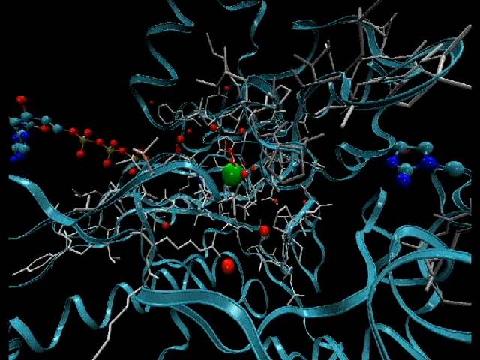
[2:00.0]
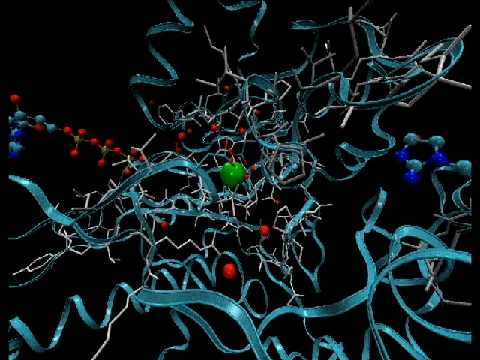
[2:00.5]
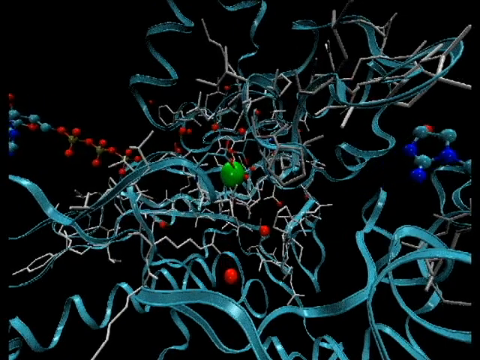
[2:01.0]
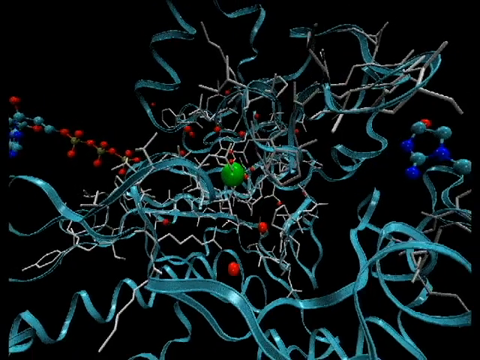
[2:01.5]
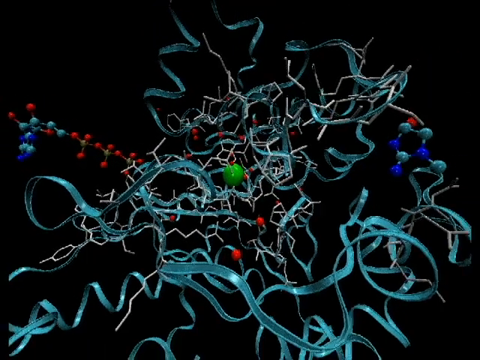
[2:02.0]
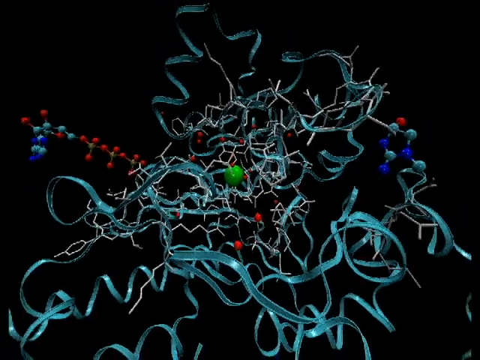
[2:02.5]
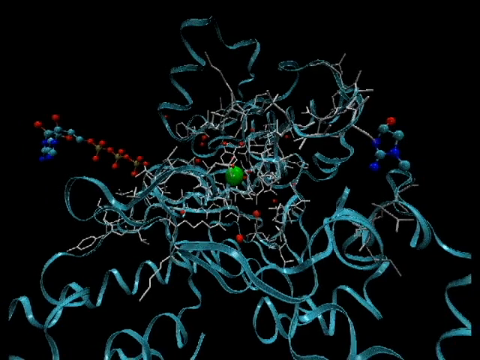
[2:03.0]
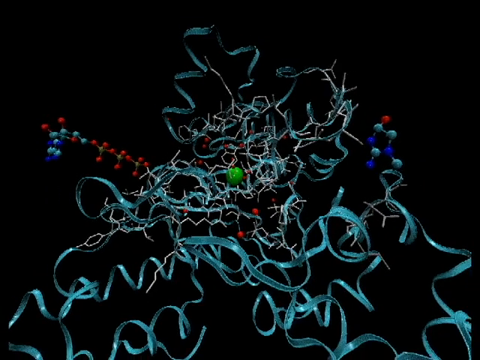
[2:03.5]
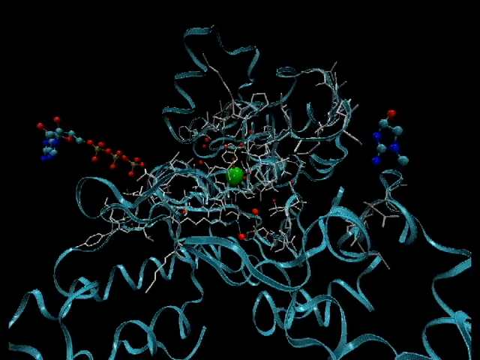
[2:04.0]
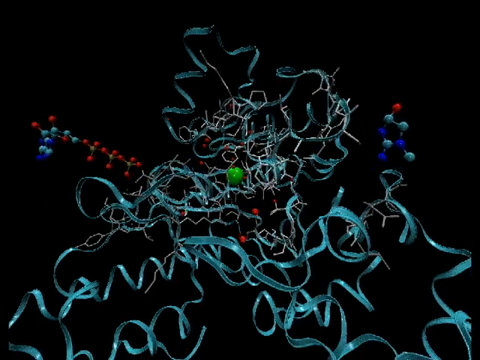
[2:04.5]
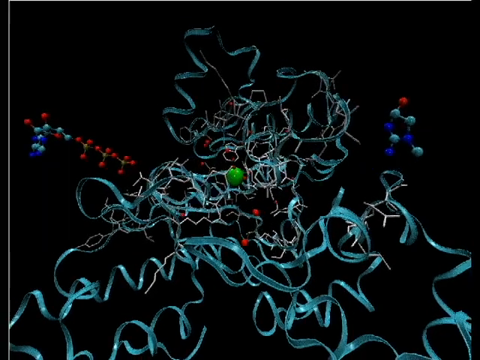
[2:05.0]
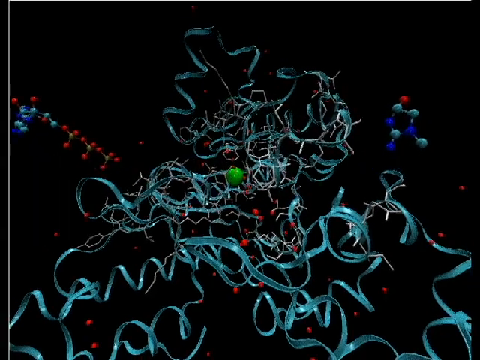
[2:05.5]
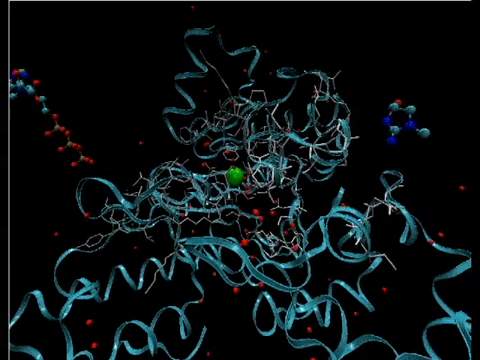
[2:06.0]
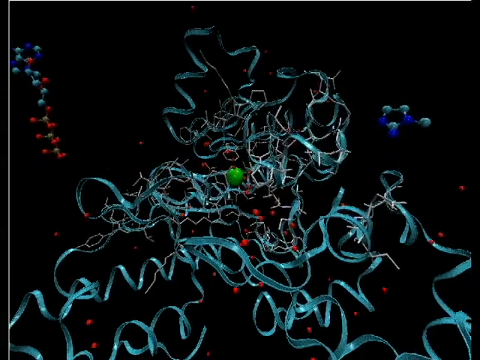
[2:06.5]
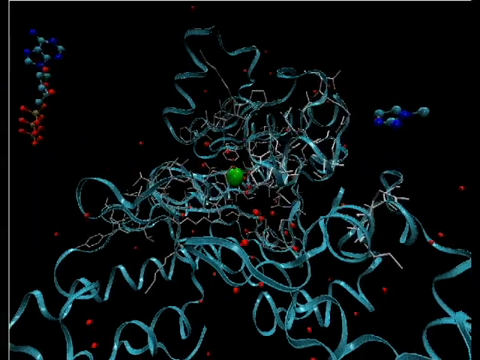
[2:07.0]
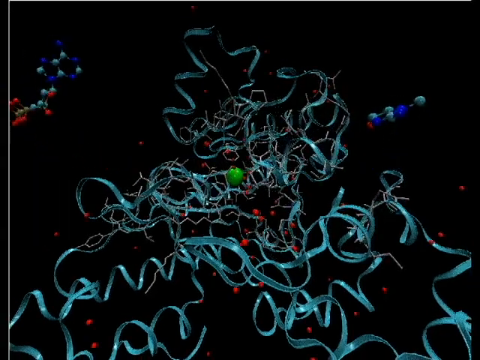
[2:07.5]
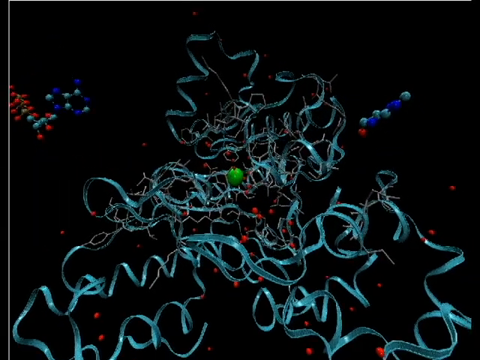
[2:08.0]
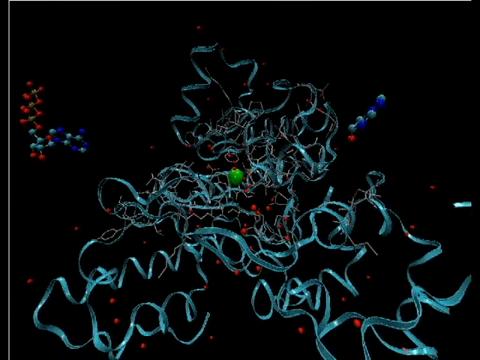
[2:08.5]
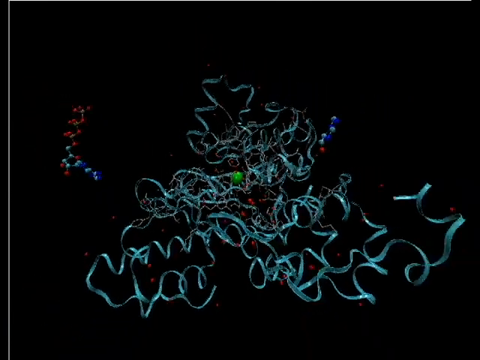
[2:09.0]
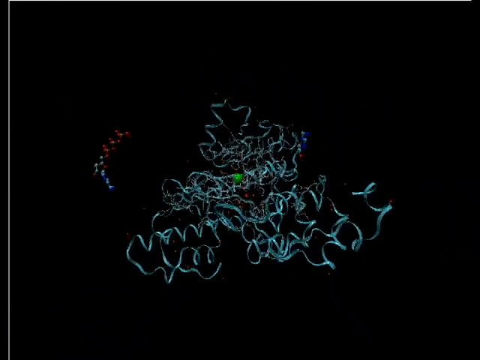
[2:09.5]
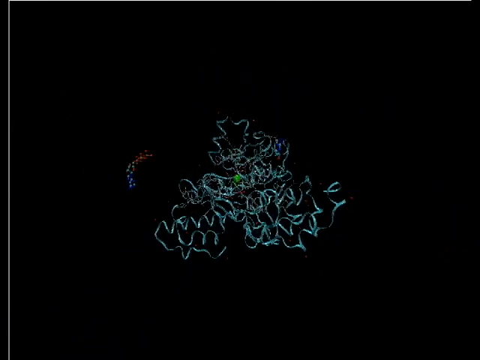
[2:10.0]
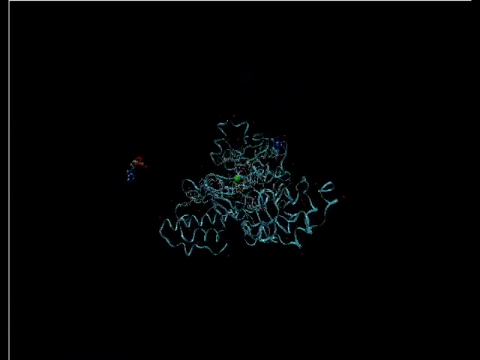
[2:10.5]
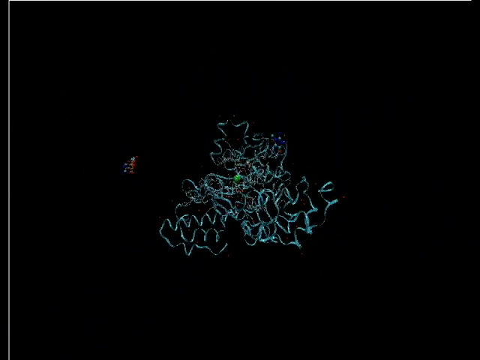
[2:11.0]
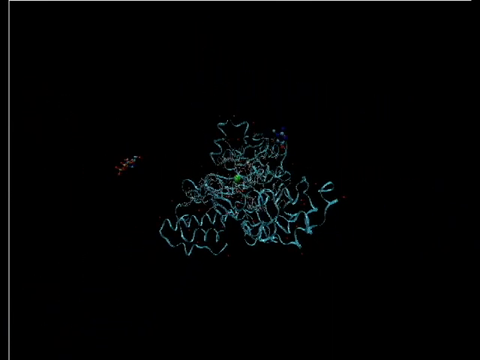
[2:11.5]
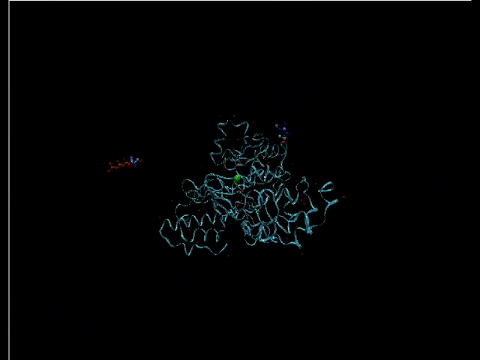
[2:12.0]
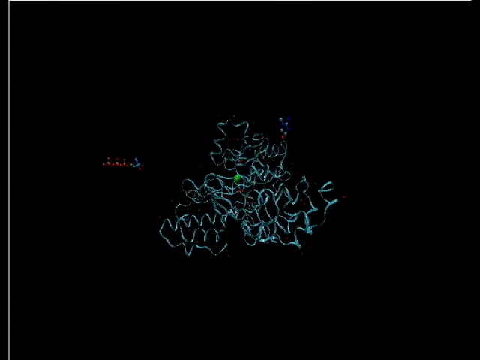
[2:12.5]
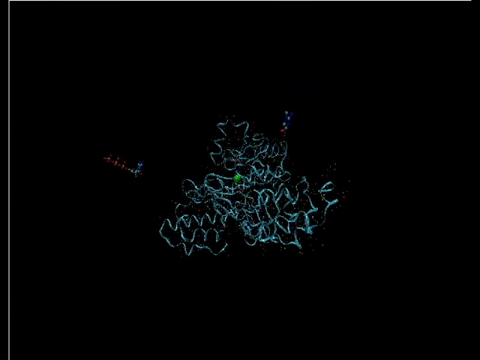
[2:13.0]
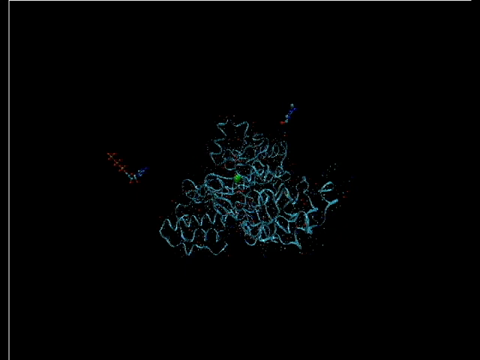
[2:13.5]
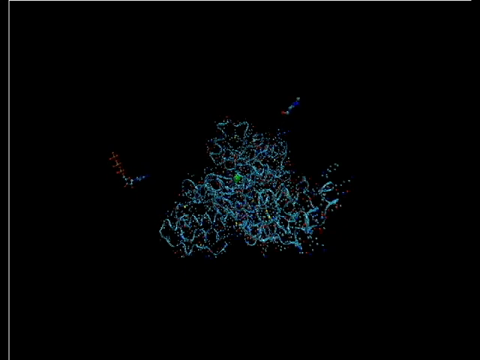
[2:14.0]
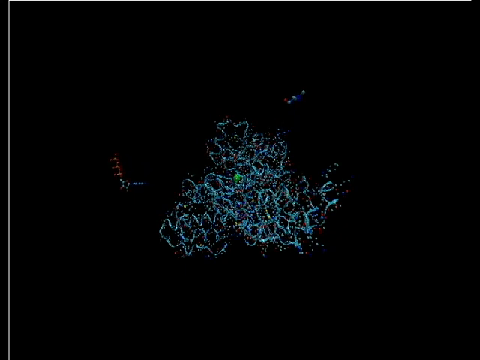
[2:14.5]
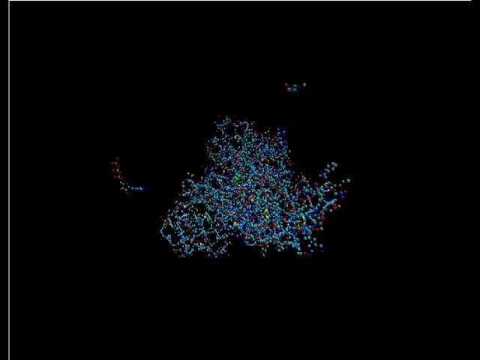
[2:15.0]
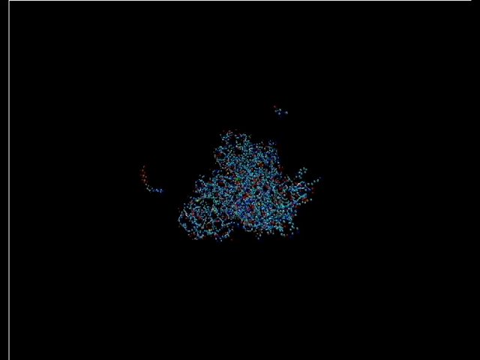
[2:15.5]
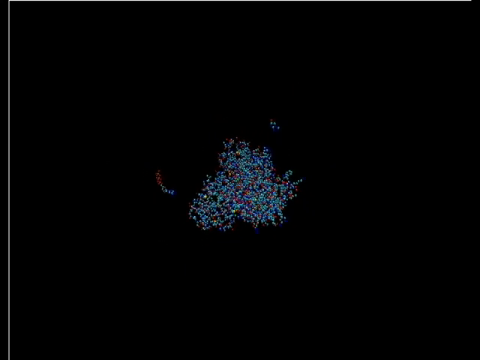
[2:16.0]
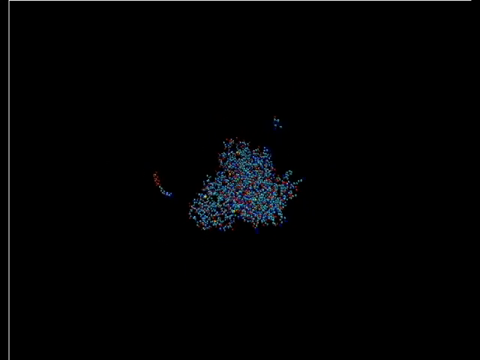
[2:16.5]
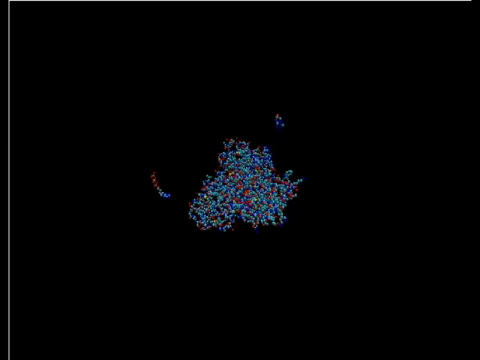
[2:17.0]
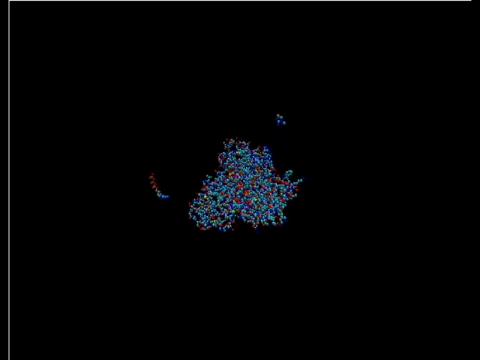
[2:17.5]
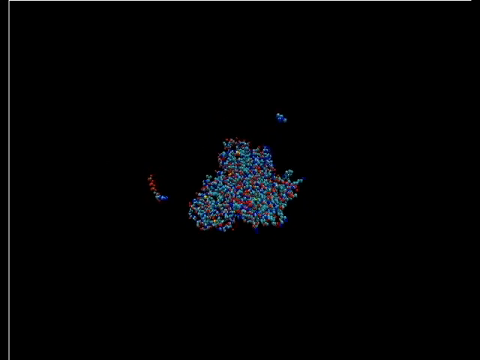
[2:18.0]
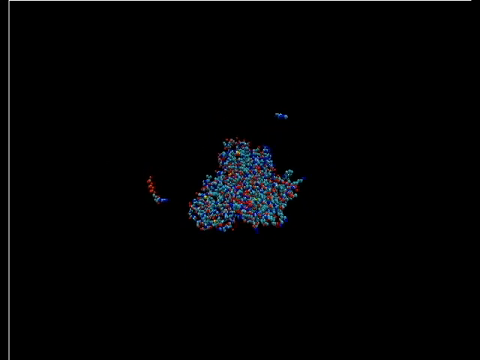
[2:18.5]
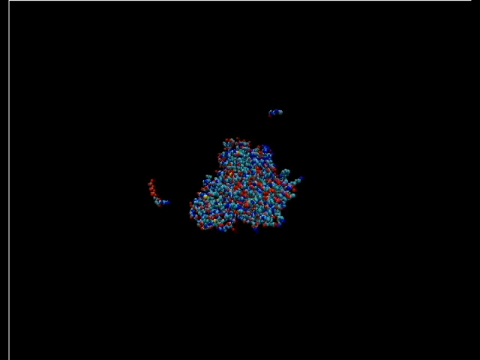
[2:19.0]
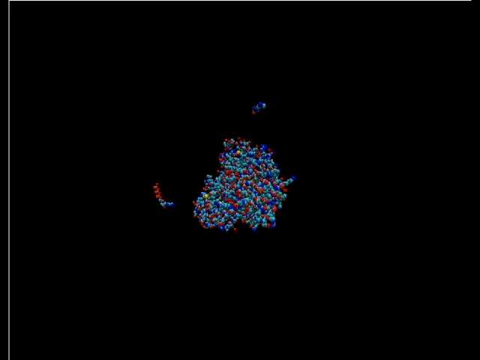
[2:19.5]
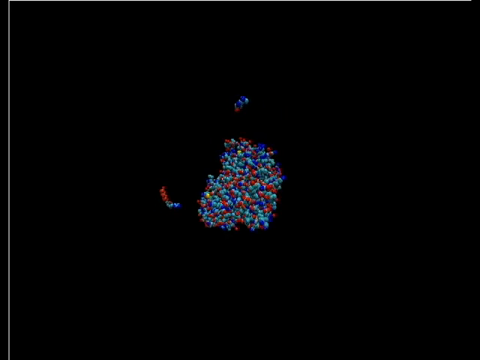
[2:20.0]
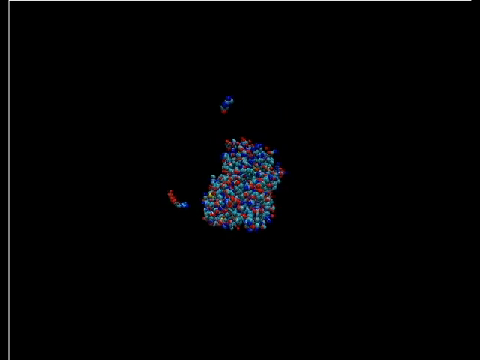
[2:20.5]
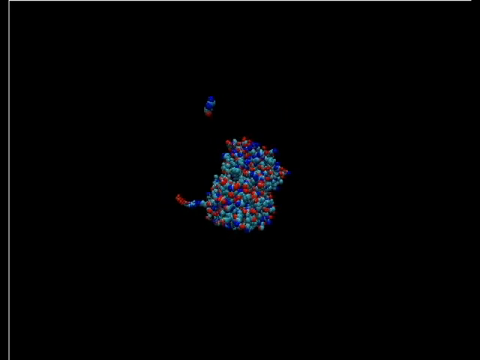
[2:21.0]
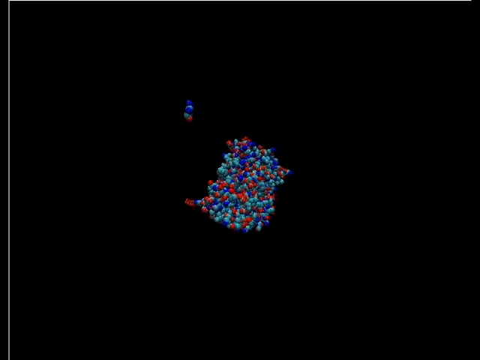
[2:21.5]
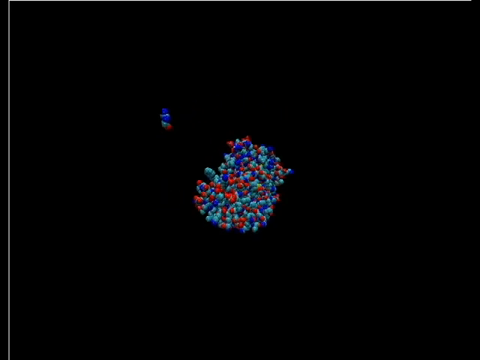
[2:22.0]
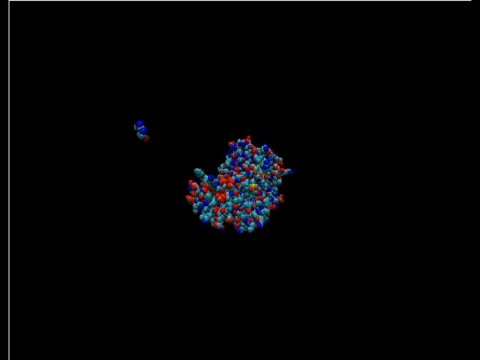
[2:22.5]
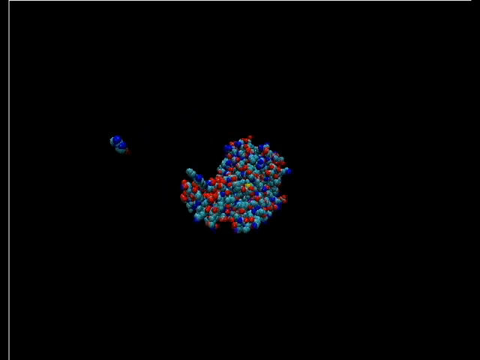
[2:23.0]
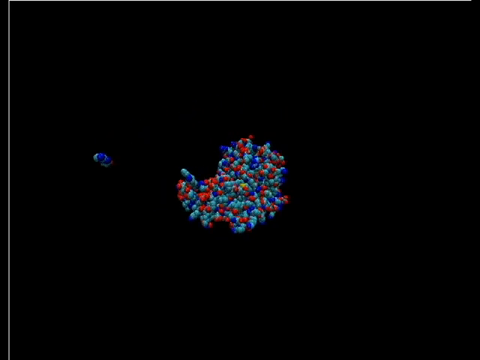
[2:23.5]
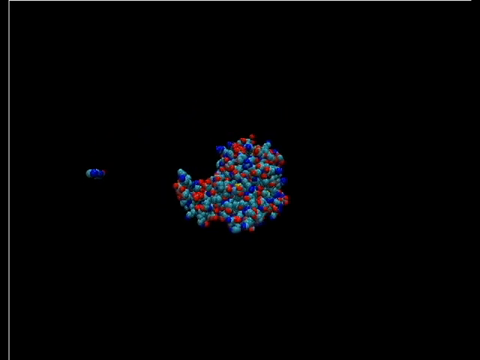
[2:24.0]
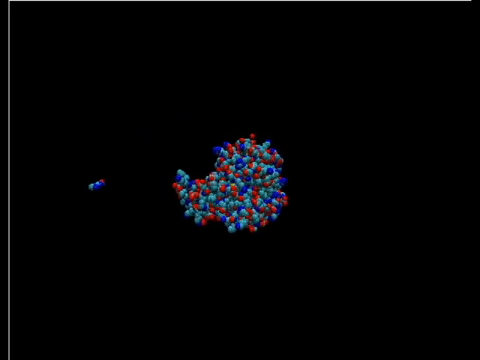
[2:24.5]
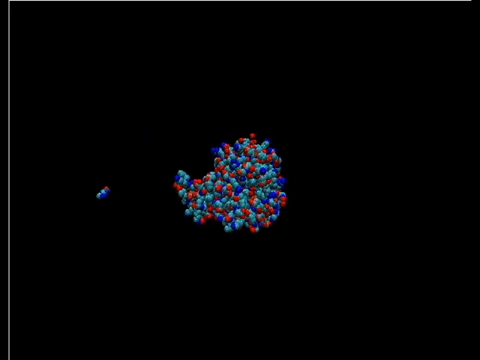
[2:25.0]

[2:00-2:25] A three-dimensional representation shows the protein creatine kinase and the molecules ADP and creatine phosphate reacting at the magnesium bonding site in the protein. The camera shows the reaction from various levels, with the very complex 3D protein and the different ions and their charges. The camera then zooms in, showing the two molecules breaking away from the protein; the reaction centres on the magnesium ion, the large green sphere in the middle of the frame. As the camera zooms out, this is lost in the complex structure. Finally the camera zooms so far out that the 3D structure of the protein is almost impossible to see, while the molecules that have separated from the protein spin through black space, apparently indicating that the reaction has finished.